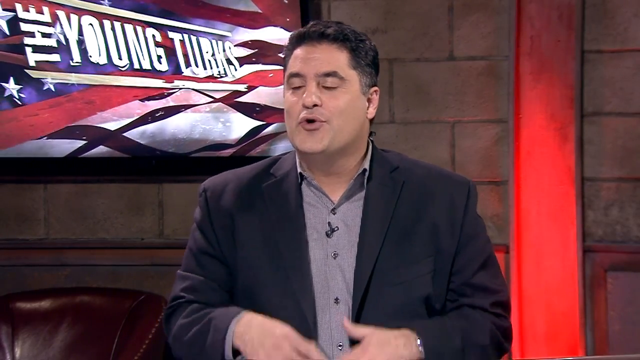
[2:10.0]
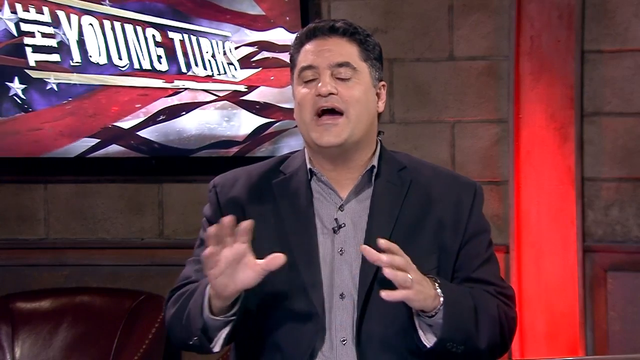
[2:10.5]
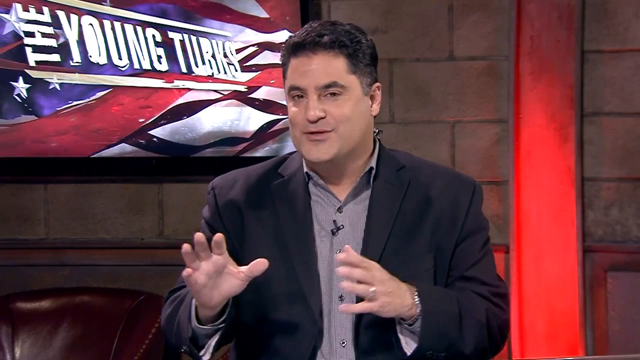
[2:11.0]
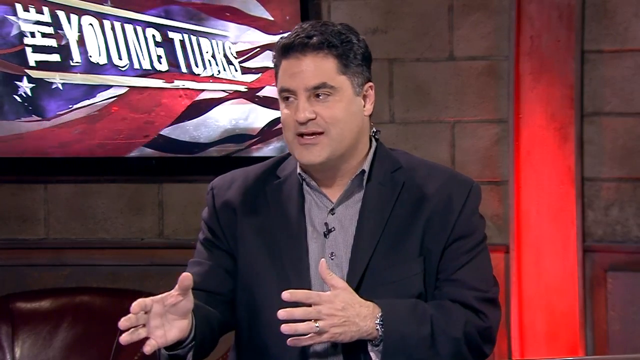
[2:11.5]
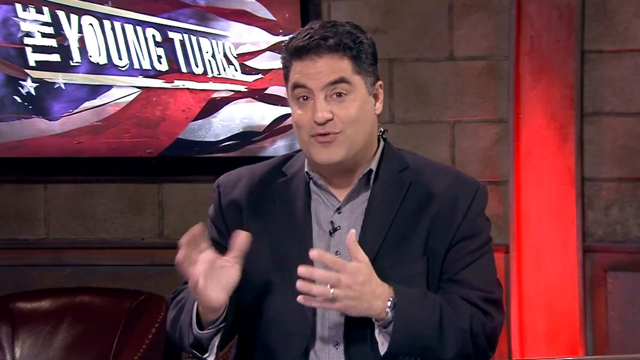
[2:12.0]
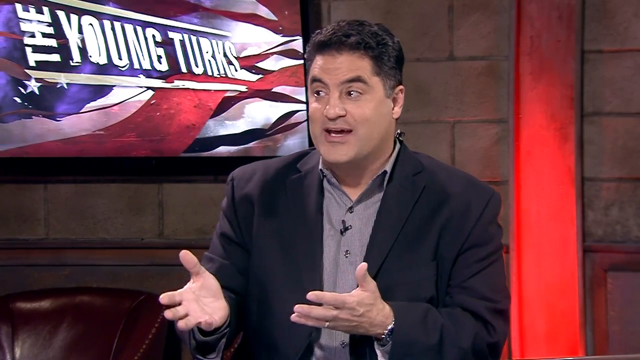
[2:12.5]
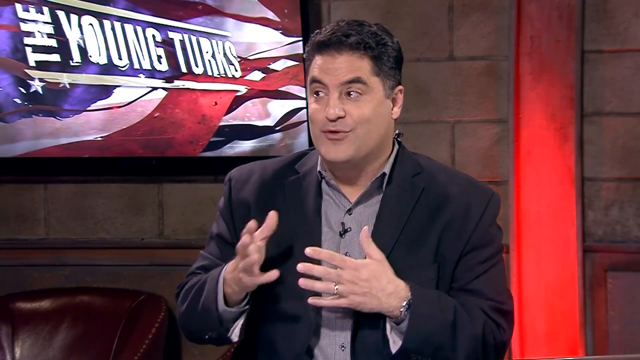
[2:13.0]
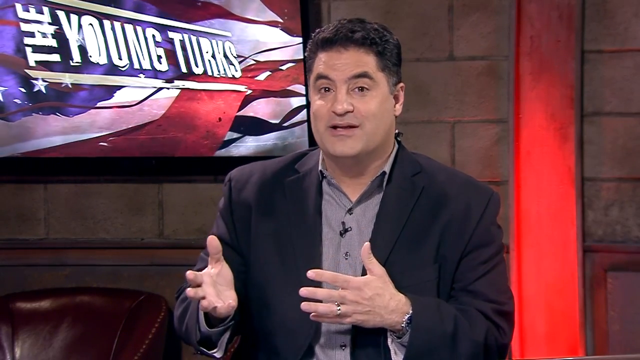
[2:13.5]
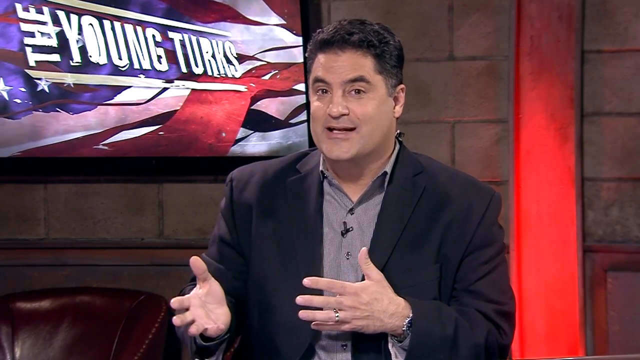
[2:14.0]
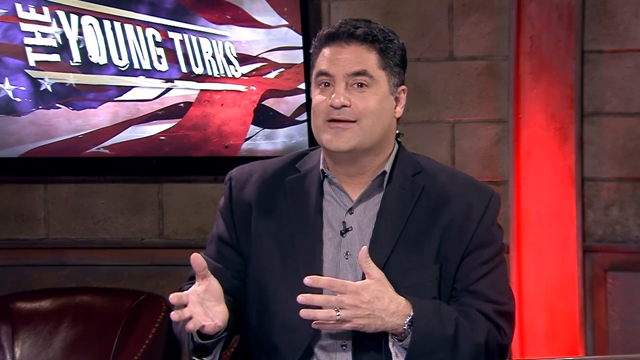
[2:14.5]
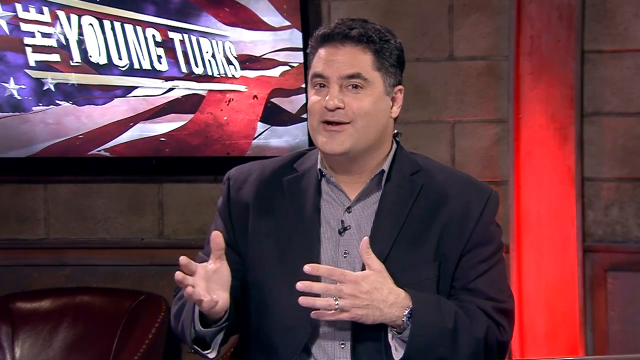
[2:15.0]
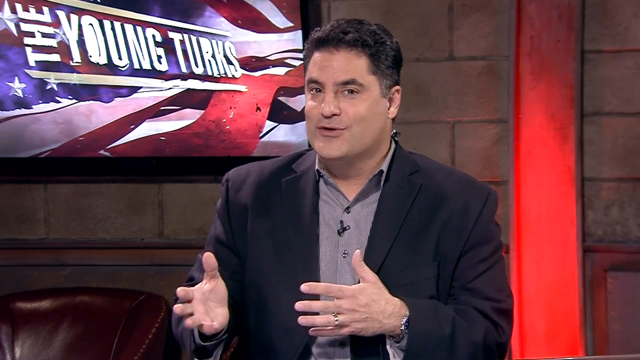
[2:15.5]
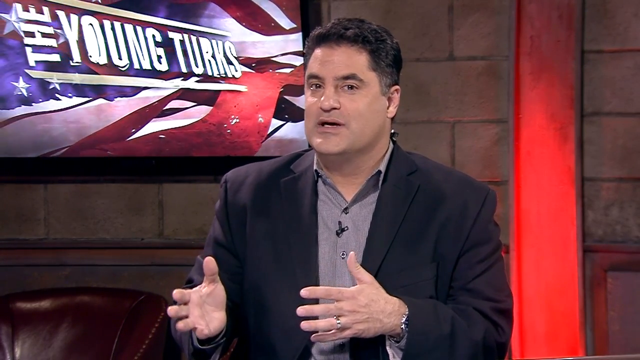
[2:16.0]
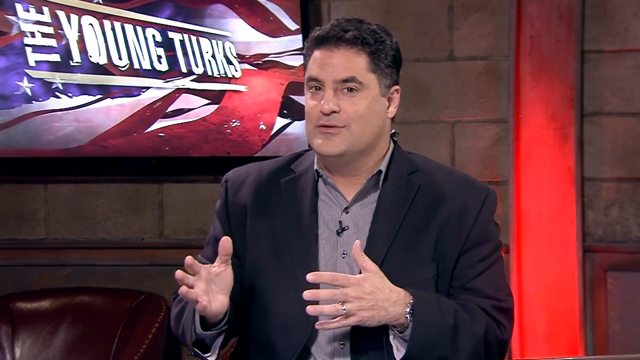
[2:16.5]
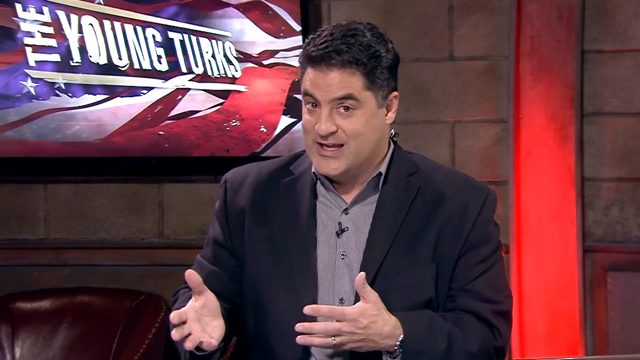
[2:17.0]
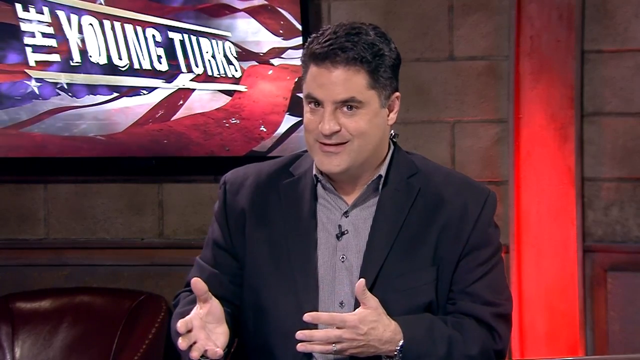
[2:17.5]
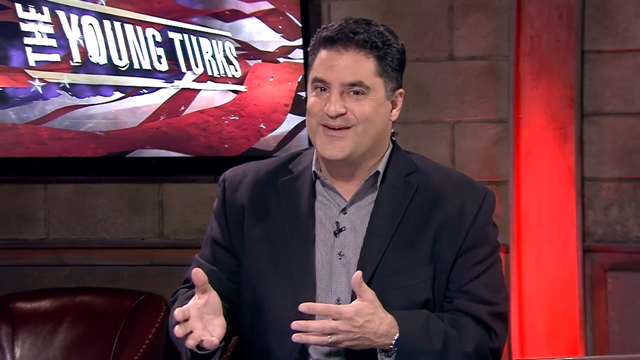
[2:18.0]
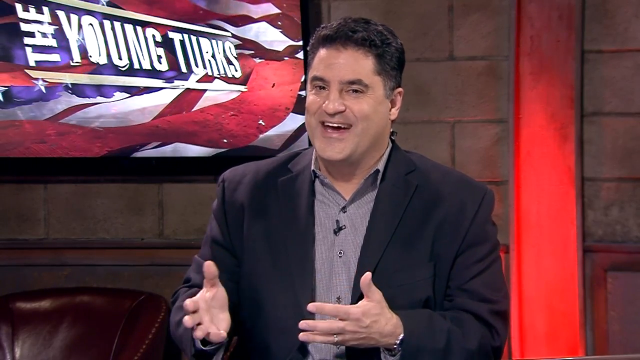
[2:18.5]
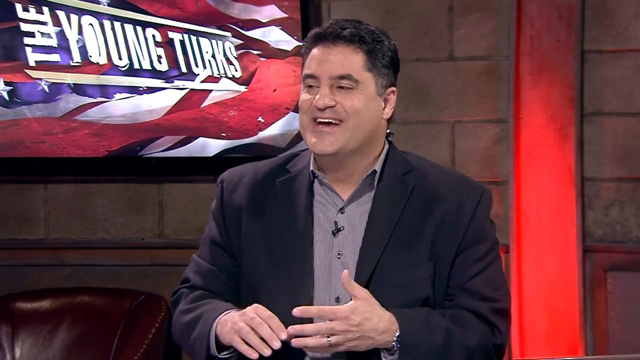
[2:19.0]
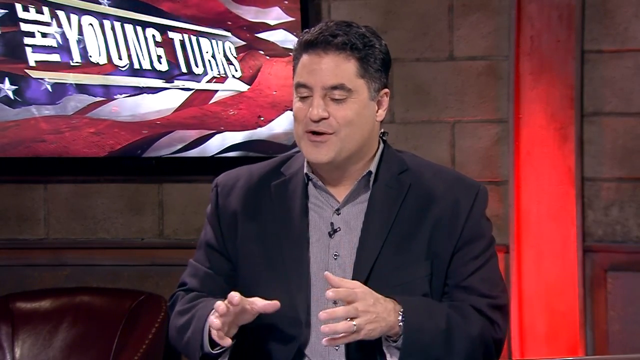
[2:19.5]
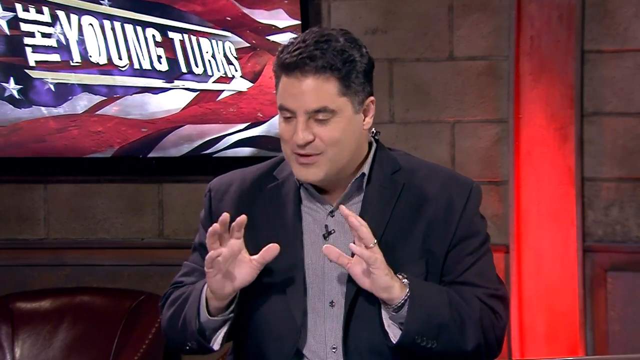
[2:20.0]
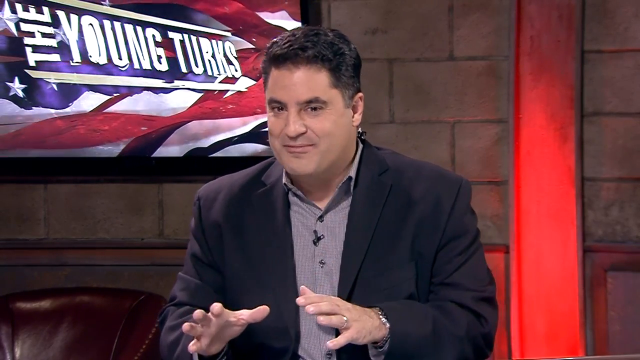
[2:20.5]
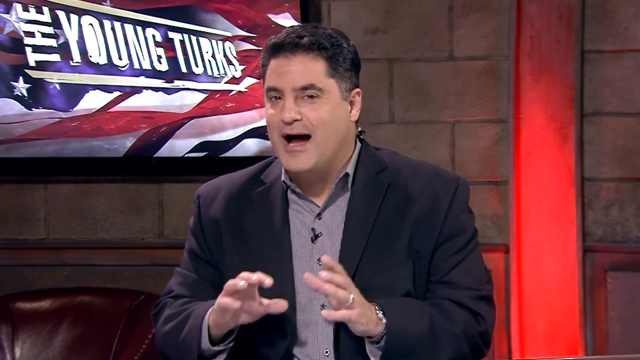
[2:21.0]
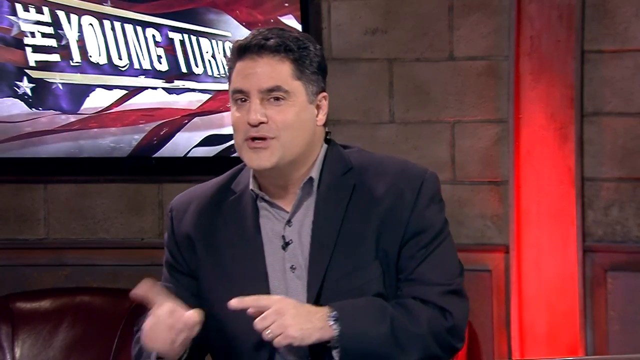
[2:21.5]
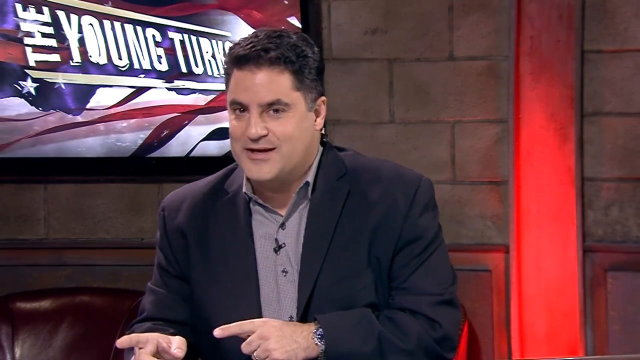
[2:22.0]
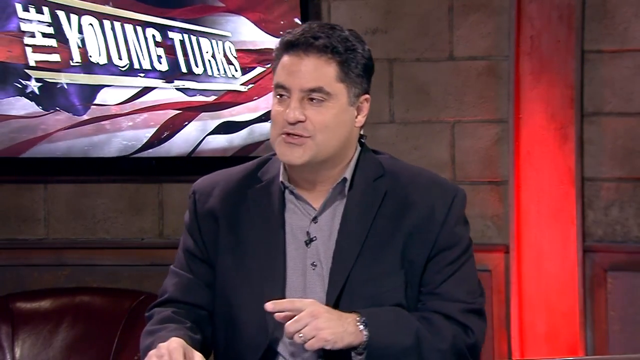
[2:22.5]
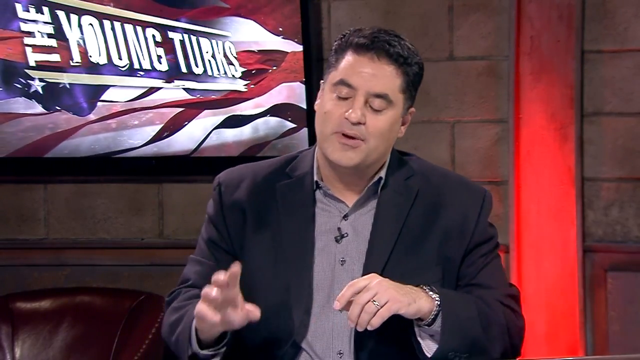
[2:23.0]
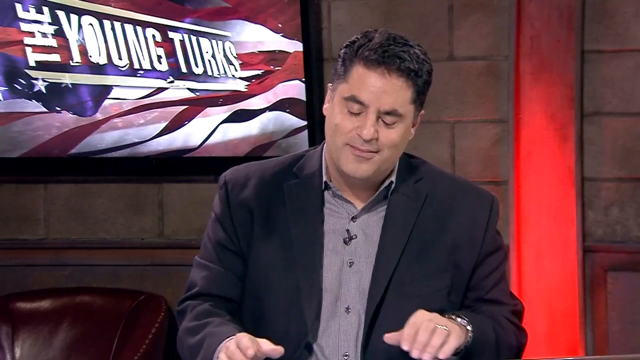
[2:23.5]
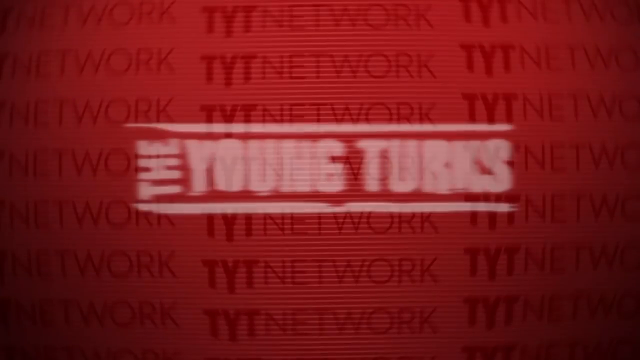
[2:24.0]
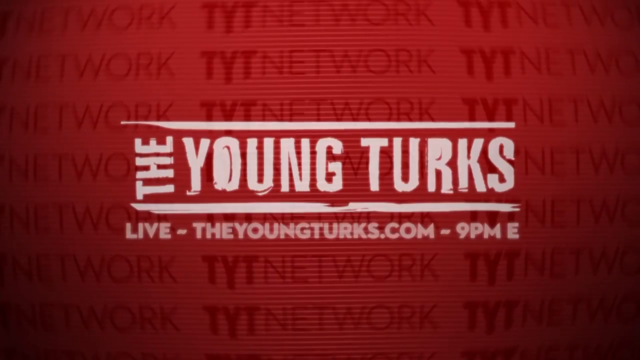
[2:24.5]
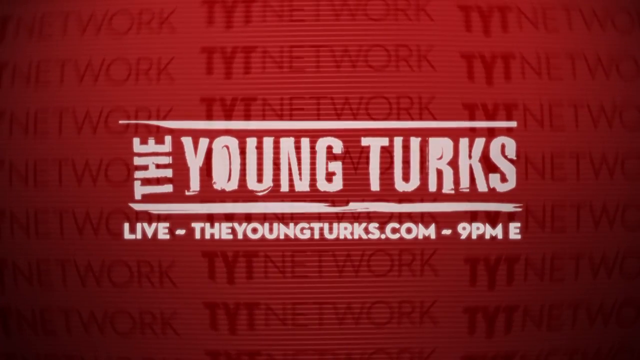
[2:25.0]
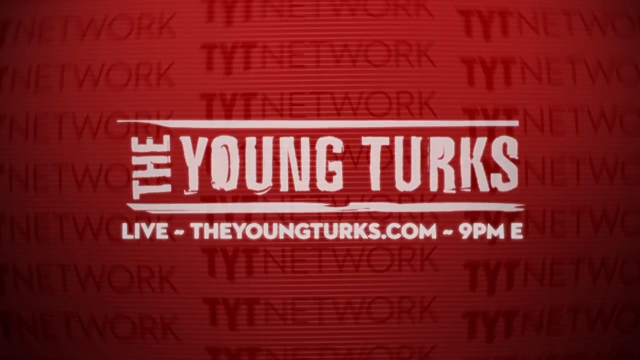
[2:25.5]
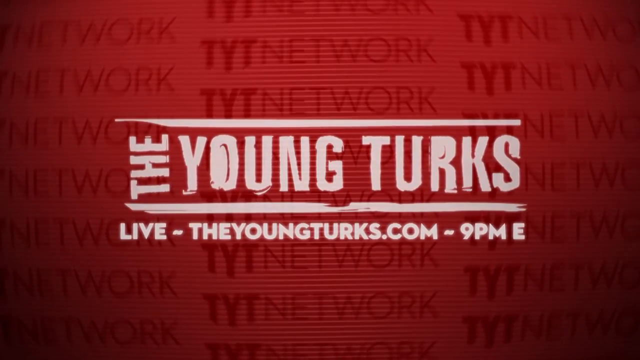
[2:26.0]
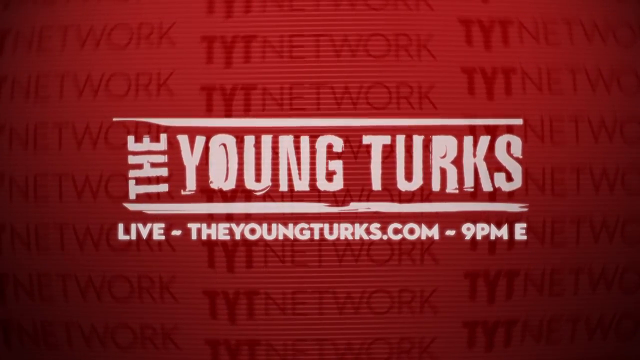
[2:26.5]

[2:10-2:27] The male reporter sits by himself at the table talking, using his hands quite a bit, moving them emphatically and pointing. He smiles a bit and makes a slight smirk as he talks, looking between the camera straight ahead and the reporter off screen to his side. He wears an open dark blazer over a light gray button-up shirt, a gold wedding band on his left ring finger, and bits of a silver watch with some kind of dark face, either blue or black, are visible on his wrist. He has dark hair. The background is light brick with a TV that says "The Young Turks" with a moving American flag graphic behind it. In the lower left corner of the screen are bits of a dark brown leather armchair with golden nail heads, apparently part of a couch or some kind of chair. The screen then pans over to an all-red screen showing "The Young Turks" graphic, with white text underneath reading "live - the young turks.com - 9 p.m. east", presumably meaning Eastern time. In the red background it says "TYT network".